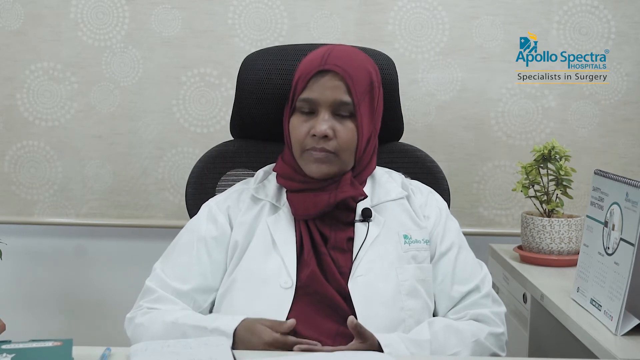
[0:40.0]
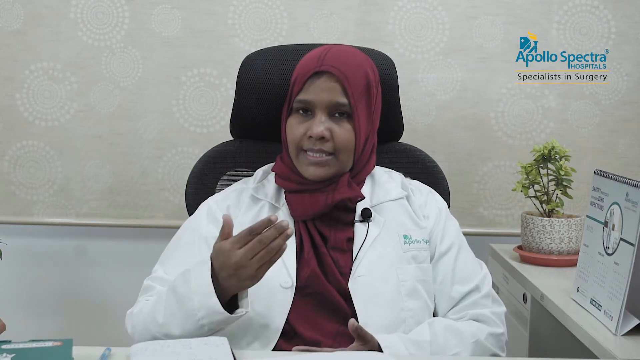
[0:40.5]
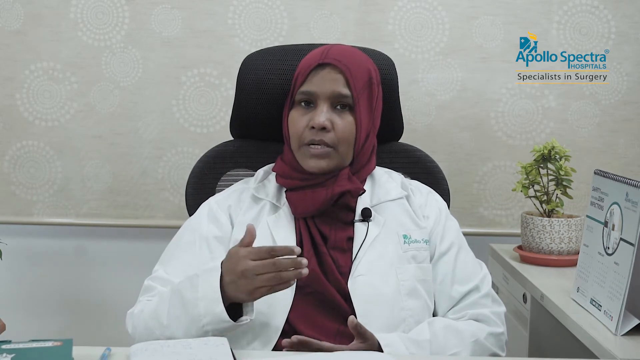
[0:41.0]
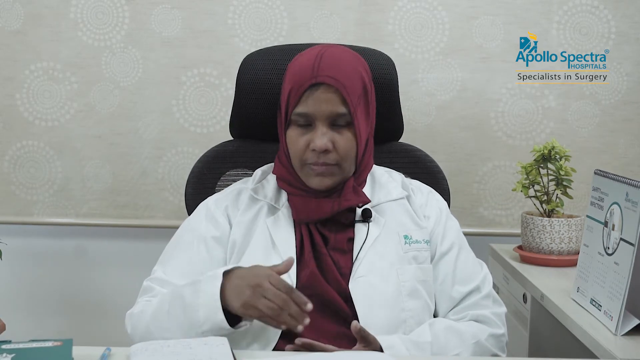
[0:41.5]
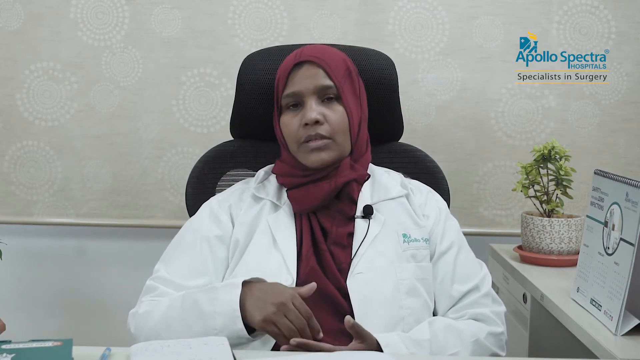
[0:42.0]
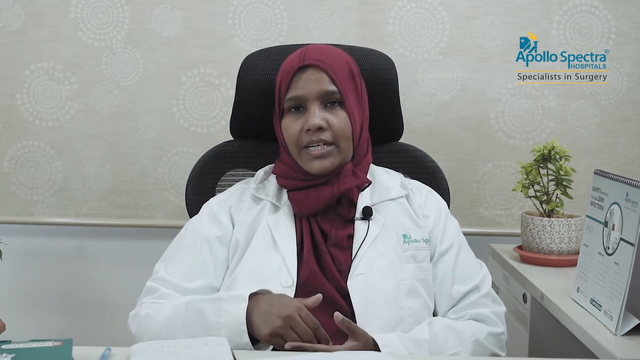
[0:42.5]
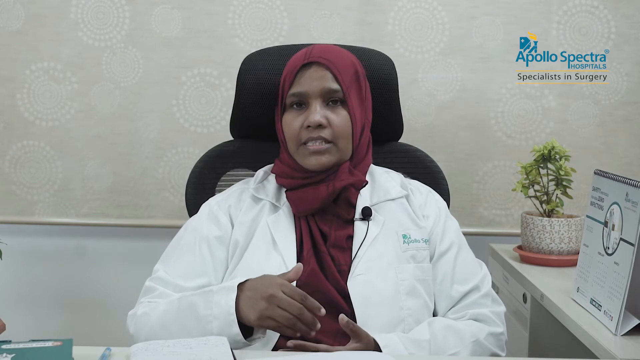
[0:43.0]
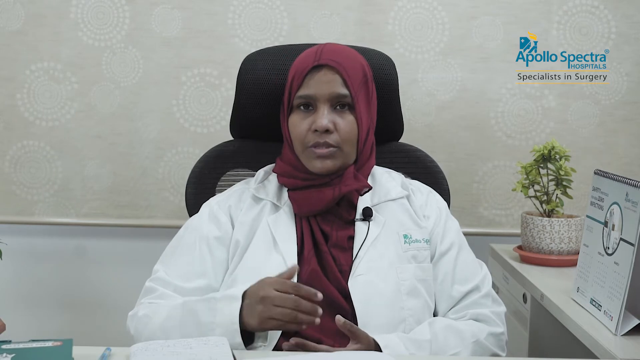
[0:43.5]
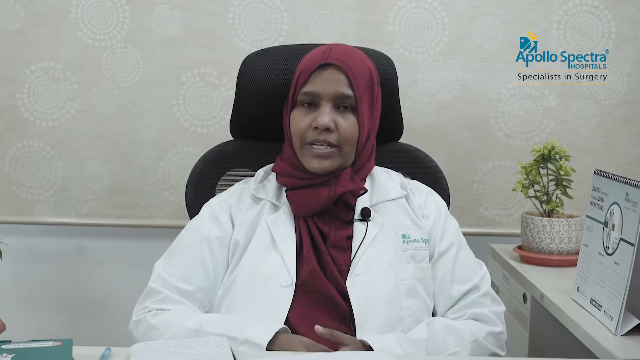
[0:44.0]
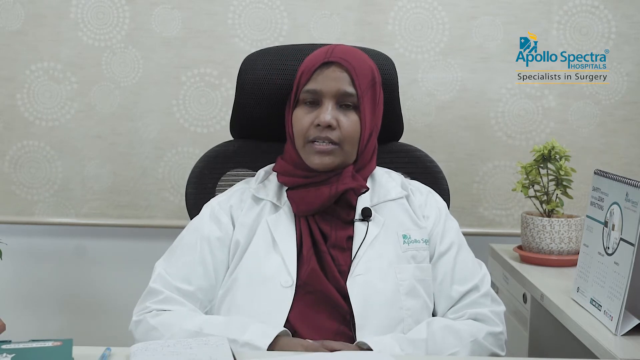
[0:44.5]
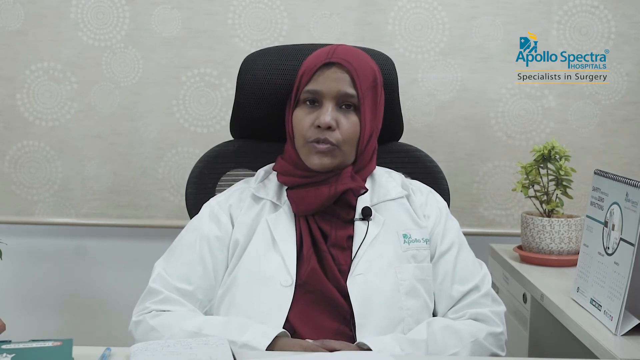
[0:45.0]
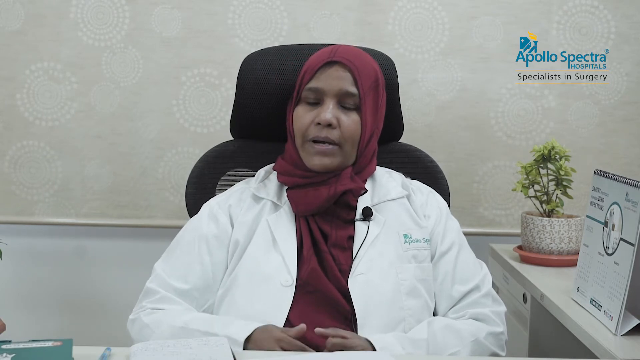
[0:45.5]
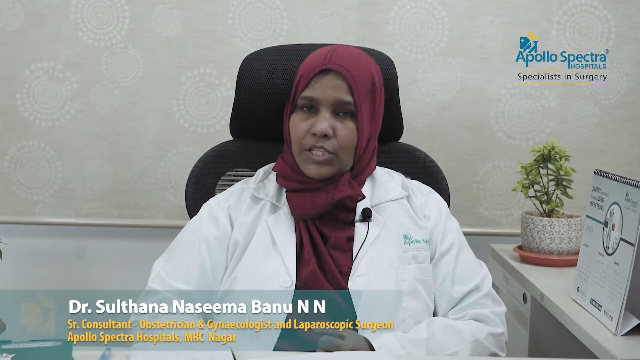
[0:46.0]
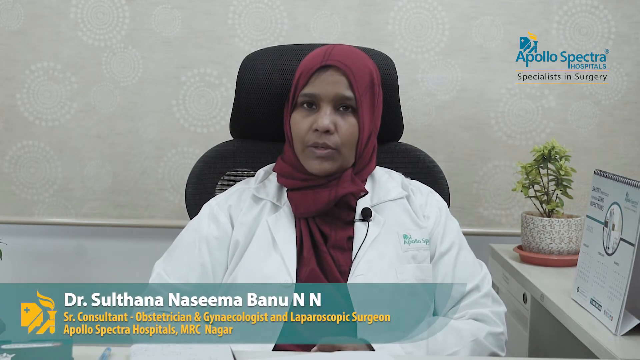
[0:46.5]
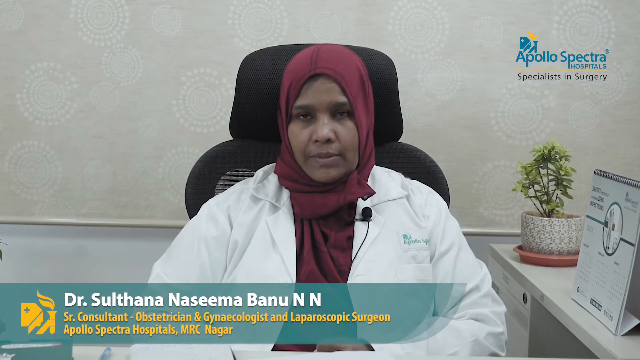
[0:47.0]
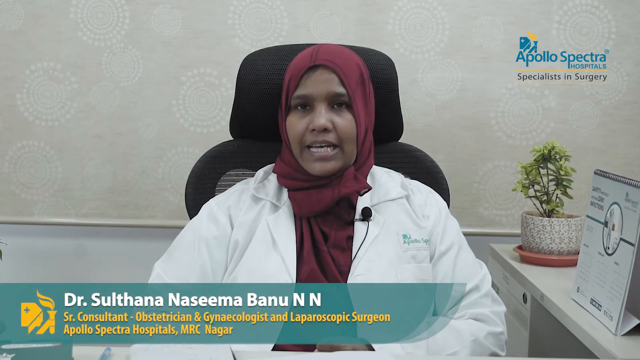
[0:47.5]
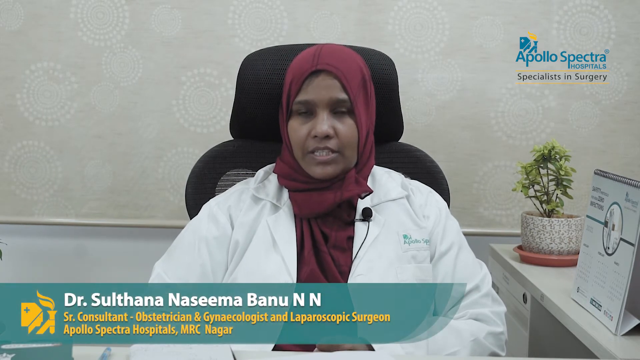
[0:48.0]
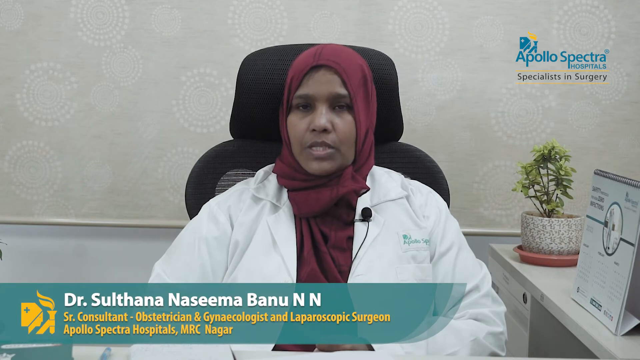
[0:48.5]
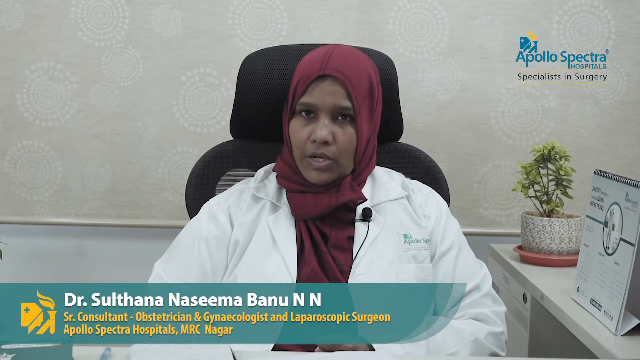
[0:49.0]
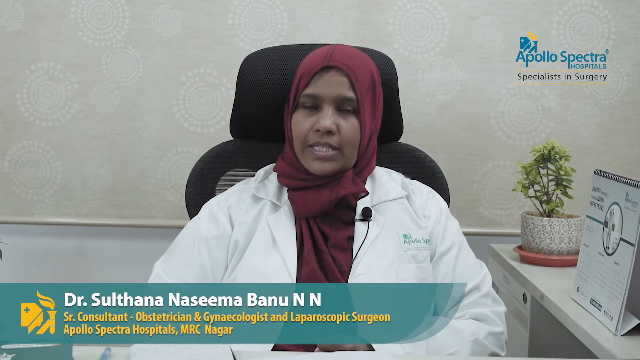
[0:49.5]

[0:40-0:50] The woman is sitting in a black chair, wearing a red headscarf and a white jacket, with a black microphone attached to her jacket. A brief flash for a hospital appears at the bottom left of the screen, and the top right reads "Apollo Spectra Hospitals Specialist in Surgery." On her desk is a small green tree plant with a vase and a tan-colored coaster, and some type of medical chart that is hard to identify is on the table to her left. Behind her, brown or tan wallpaper with white circles covers only the top half of the wall; the bottom half is painted white. The two are separated by some type of trim the same color as the wallpapered top half. She is very animated.